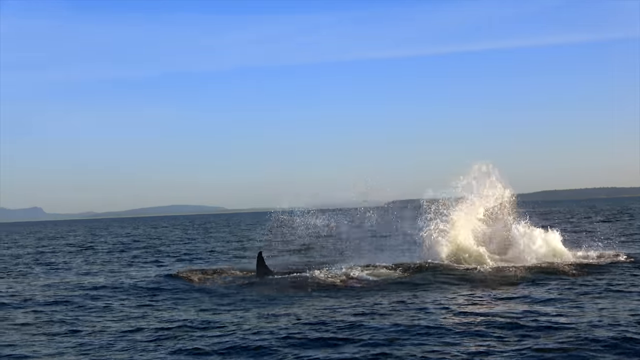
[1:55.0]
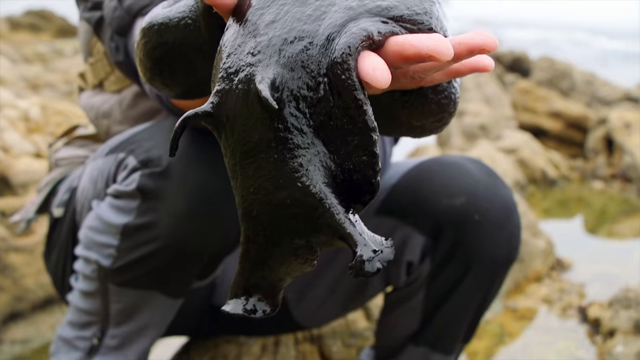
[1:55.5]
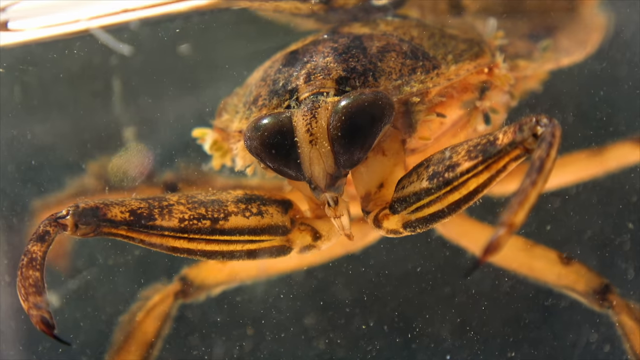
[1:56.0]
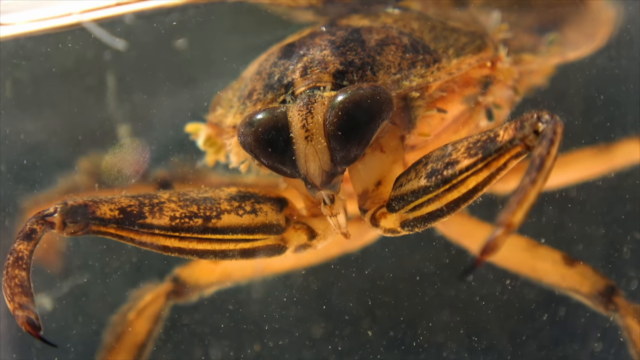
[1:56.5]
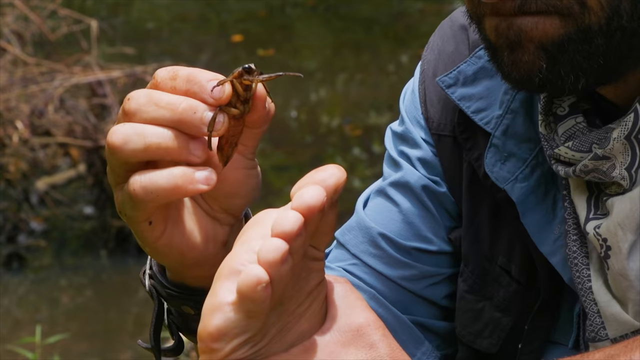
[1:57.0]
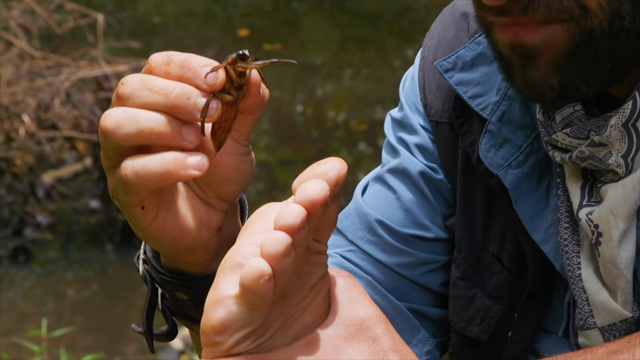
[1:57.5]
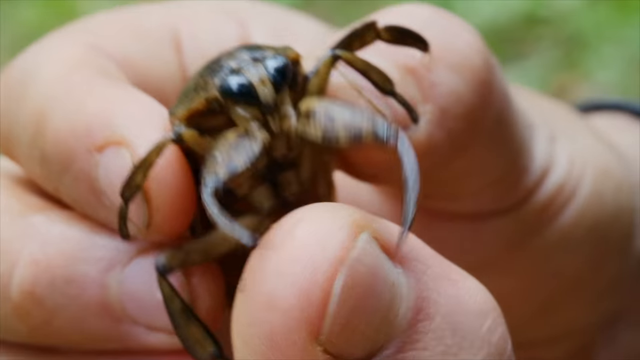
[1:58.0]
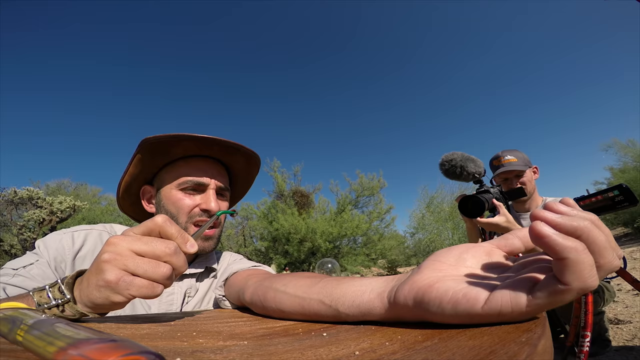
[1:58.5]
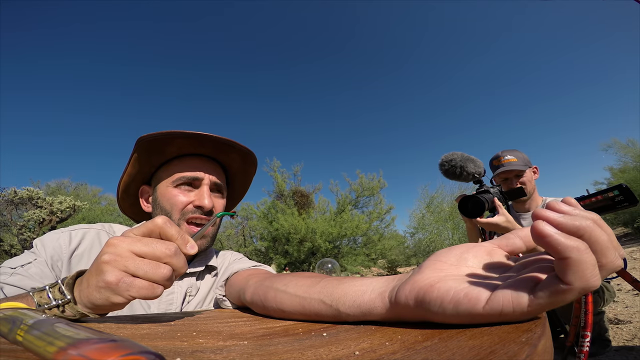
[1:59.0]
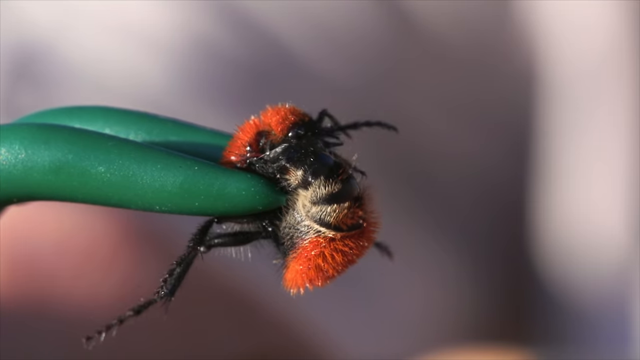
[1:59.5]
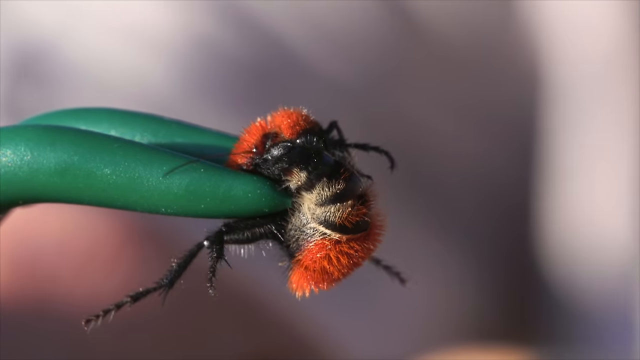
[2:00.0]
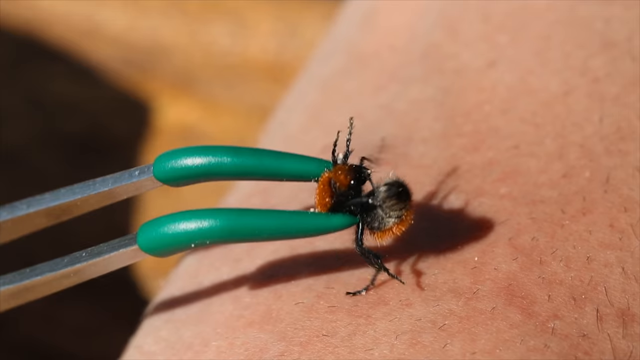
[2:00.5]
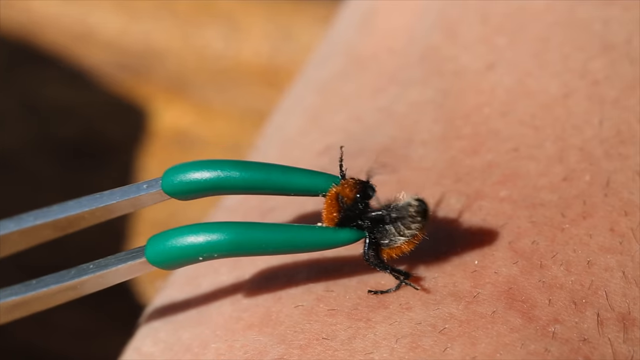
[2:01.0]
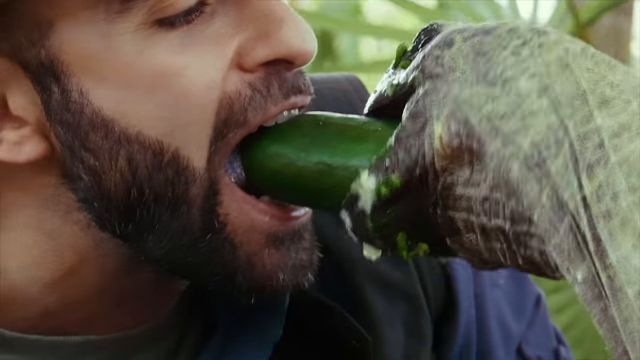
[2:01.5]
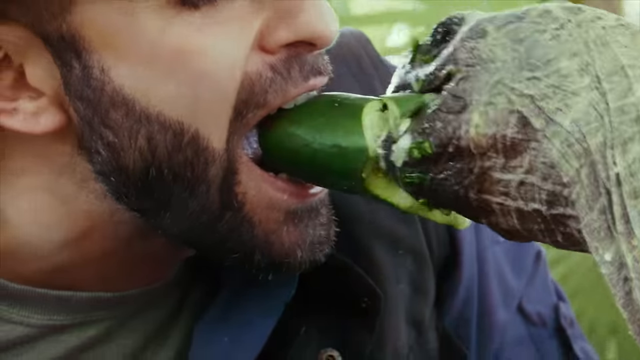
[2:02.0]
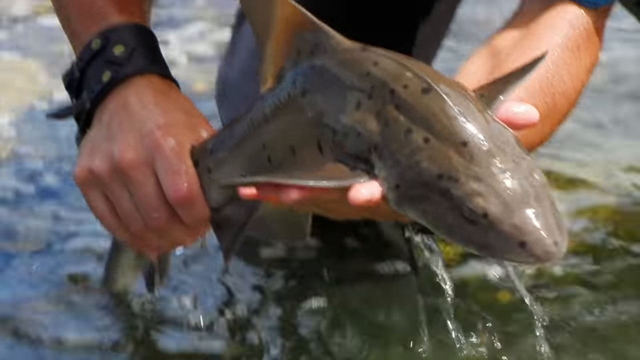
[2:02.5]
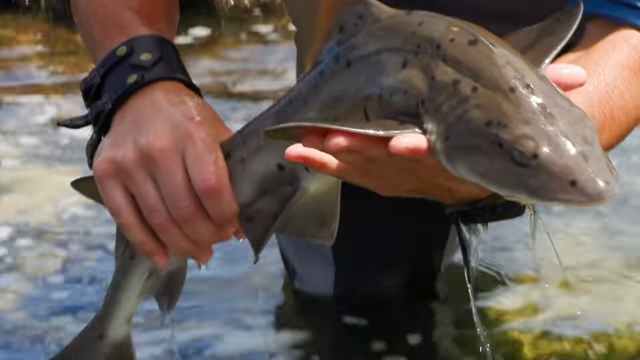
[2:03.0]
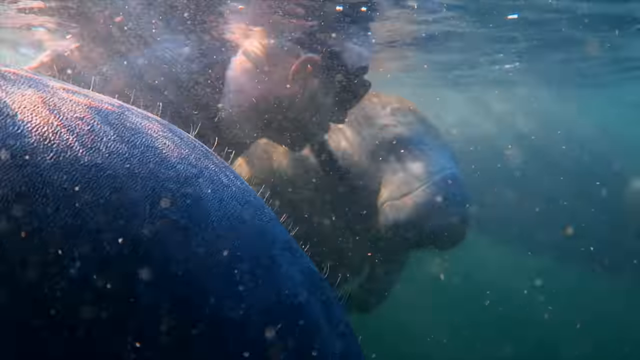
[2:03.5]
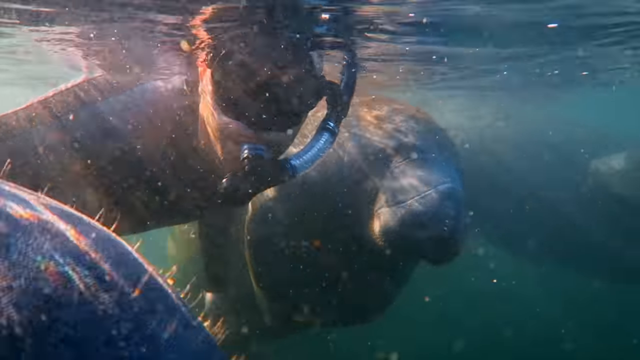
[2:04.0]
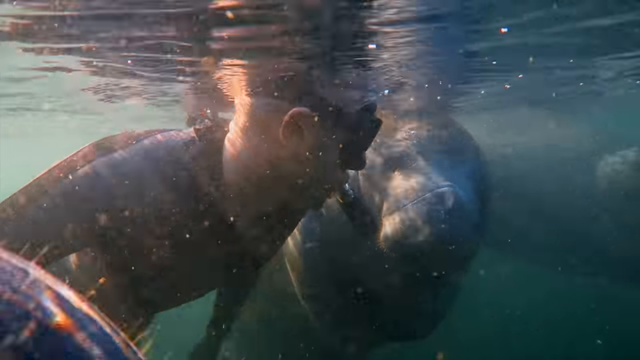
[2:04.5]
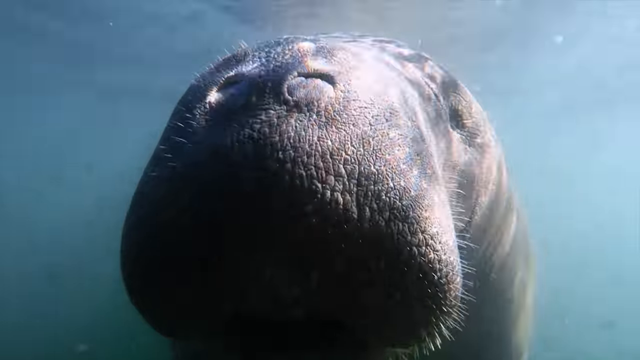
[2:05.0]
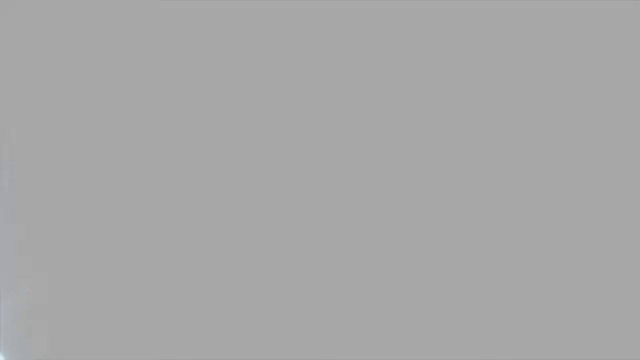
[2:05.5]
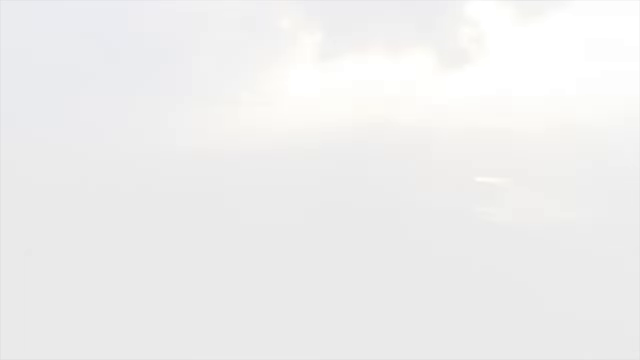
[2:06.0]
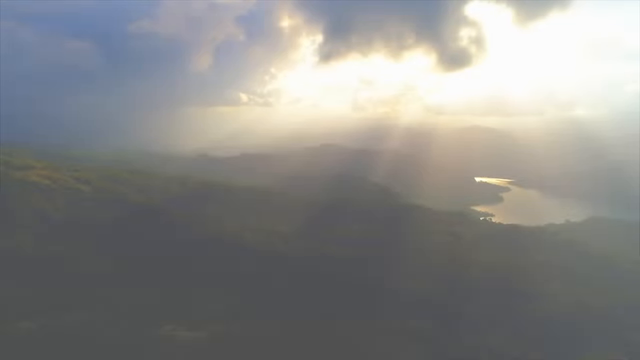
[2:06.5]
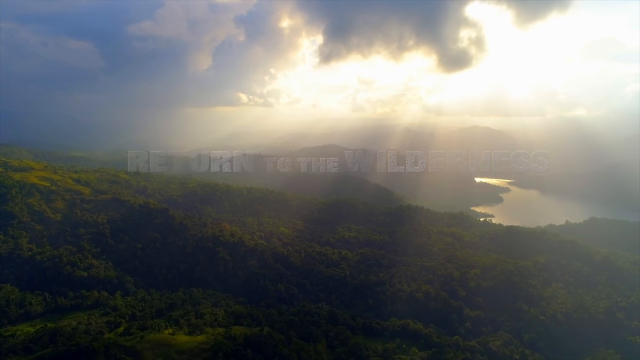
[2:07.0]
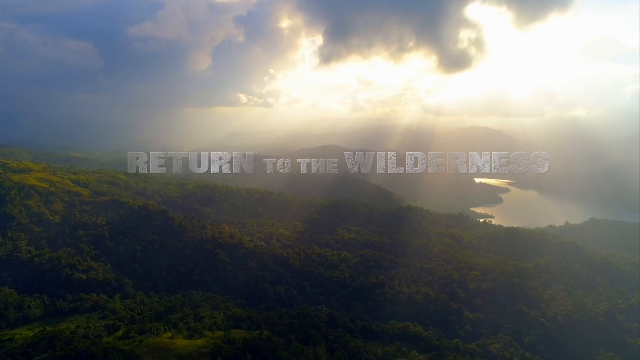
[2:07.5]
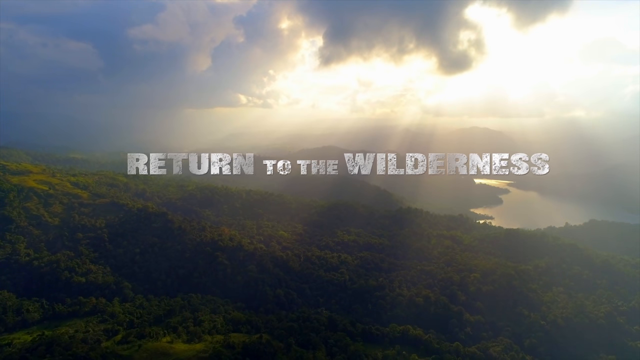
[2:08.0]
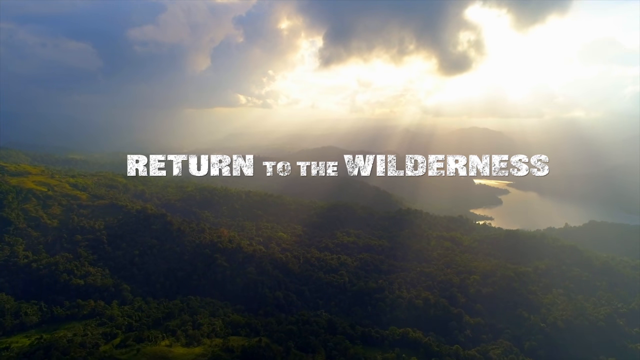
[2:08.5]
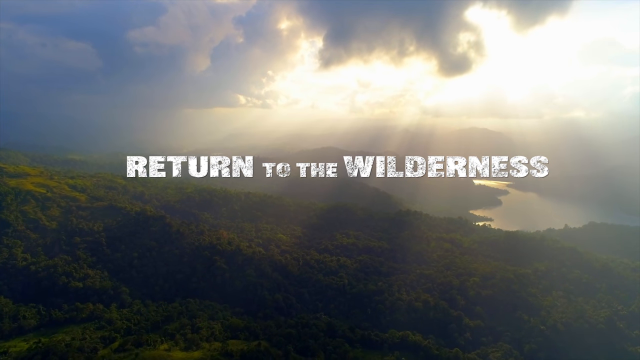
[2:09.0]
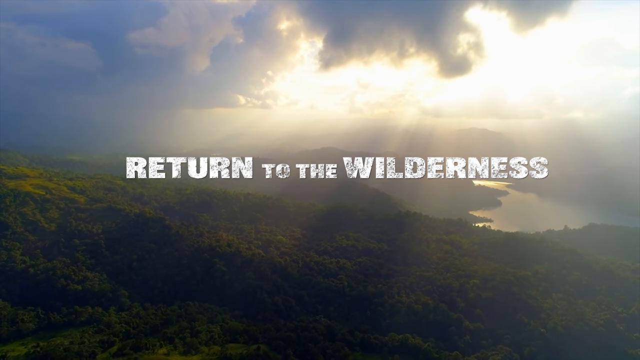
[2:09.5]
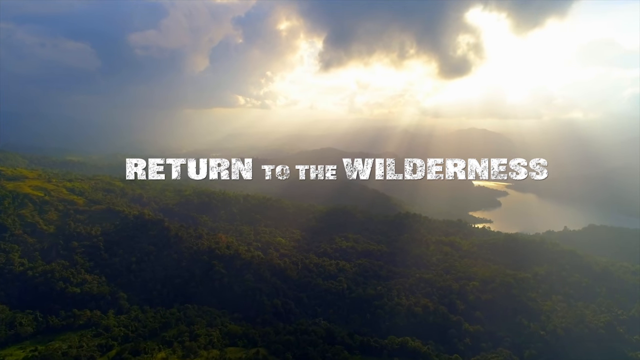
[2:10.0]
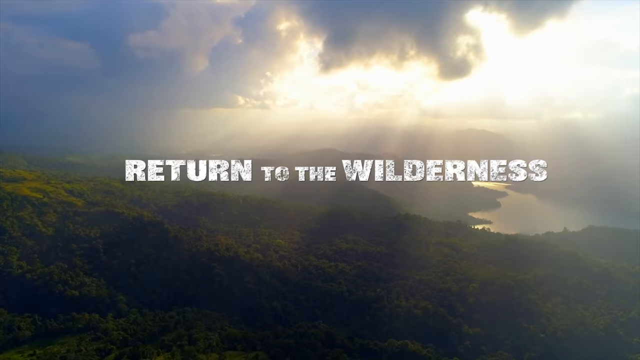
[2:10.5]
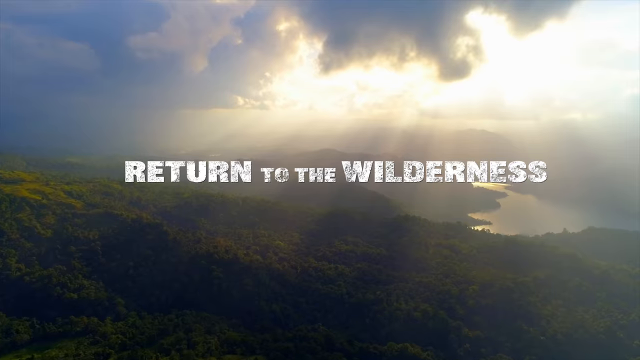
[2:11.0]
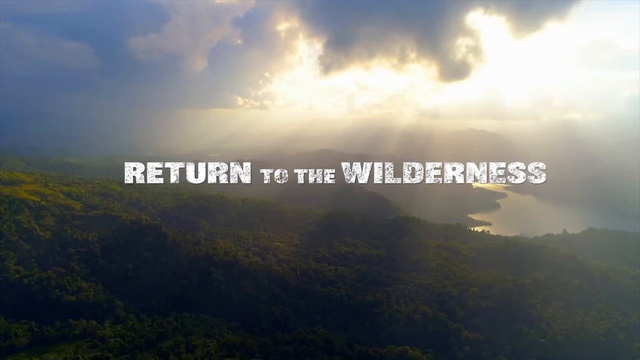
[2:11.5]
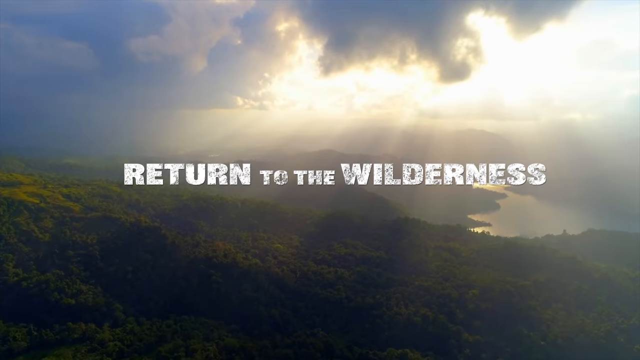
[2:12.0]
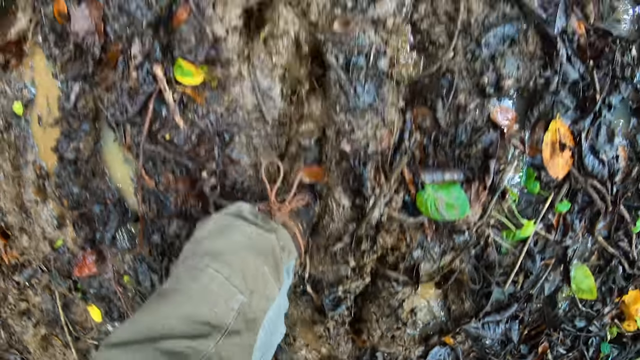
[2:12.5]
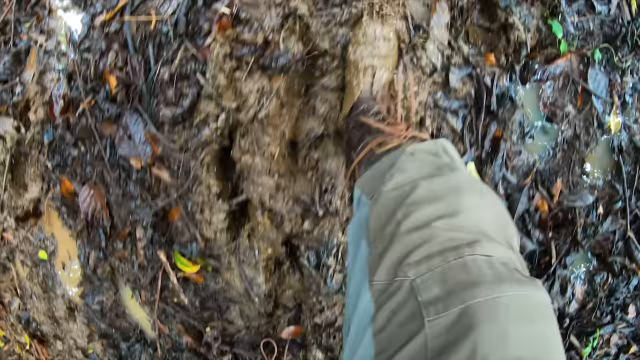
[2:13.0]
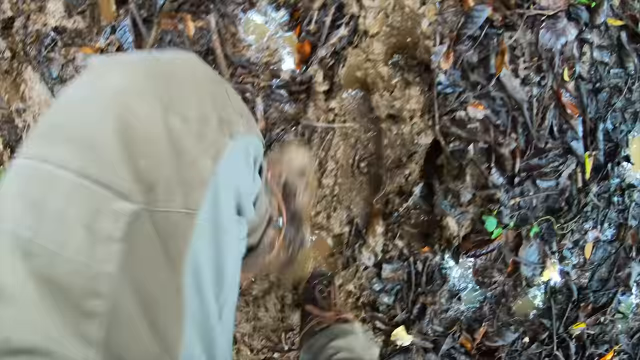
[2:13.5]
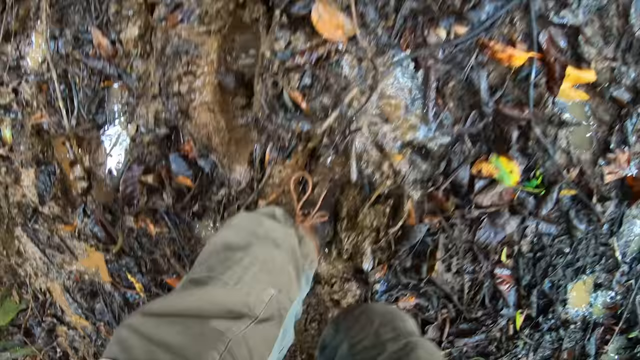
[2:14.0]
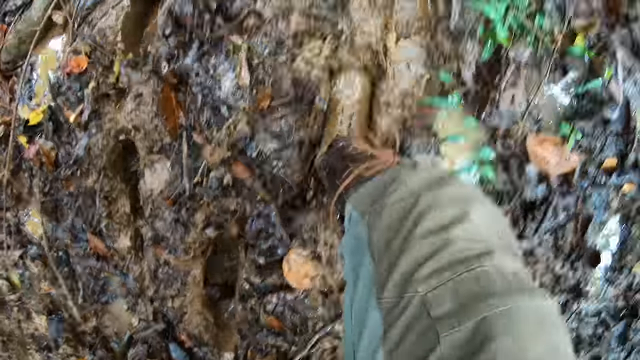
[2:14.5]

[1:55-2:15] Again the host holds different sorts of animals: big animals, small animals, insects, land animals and marine animals. Very fast shots show these animals and the host interacting with them in different settings such as forests, a beach, underwater and in lakes. Some of the smaller insects are held by tweezers and move on the host's hands and feet. The video ends with a shot of a natural environment that seems to be taken from a drone, with words reading "return to the wilderness". It seems like the end of an advertisement for a nature documentary.